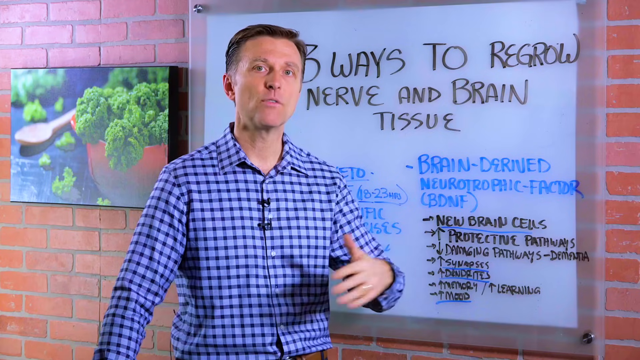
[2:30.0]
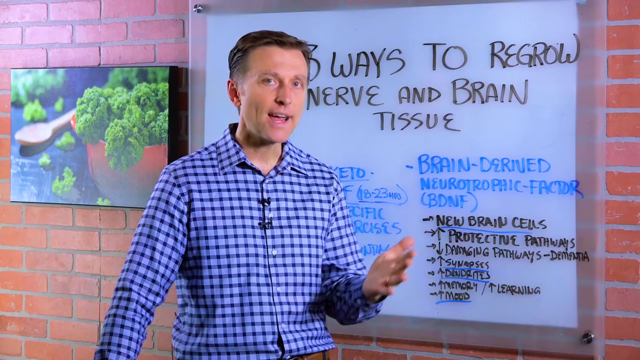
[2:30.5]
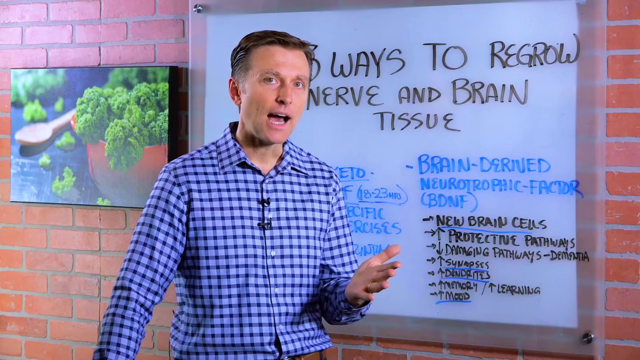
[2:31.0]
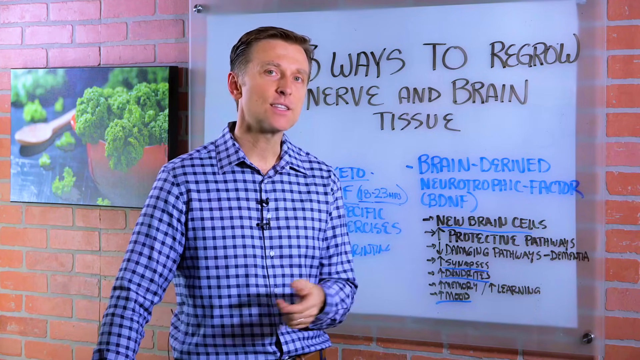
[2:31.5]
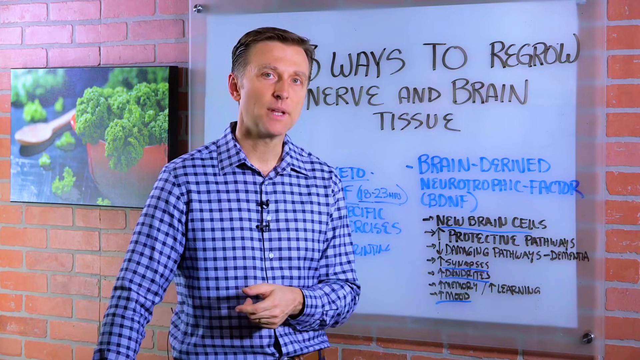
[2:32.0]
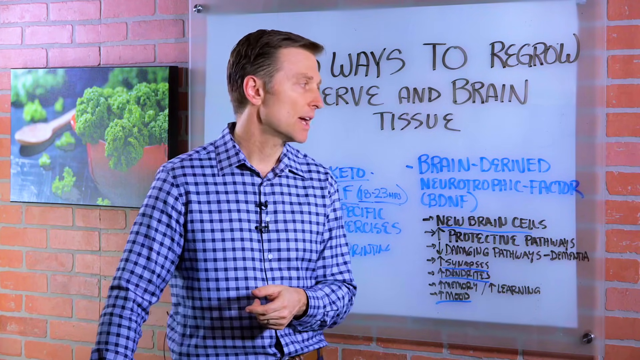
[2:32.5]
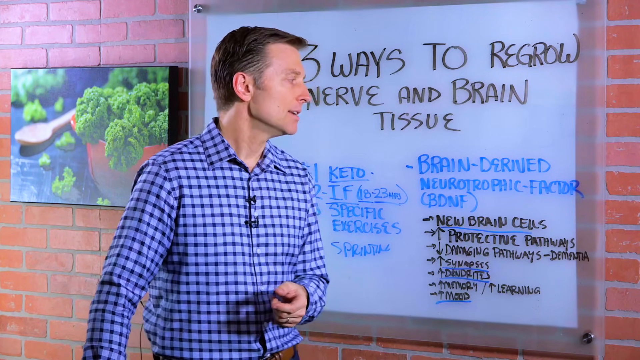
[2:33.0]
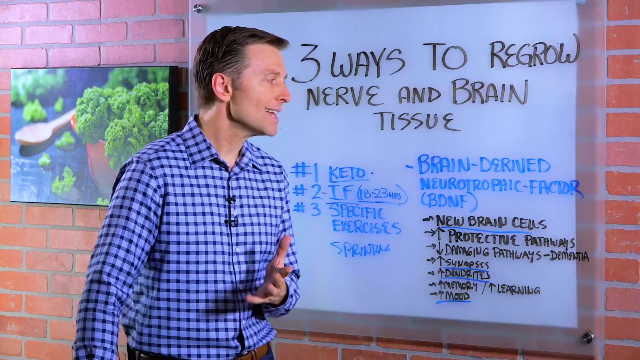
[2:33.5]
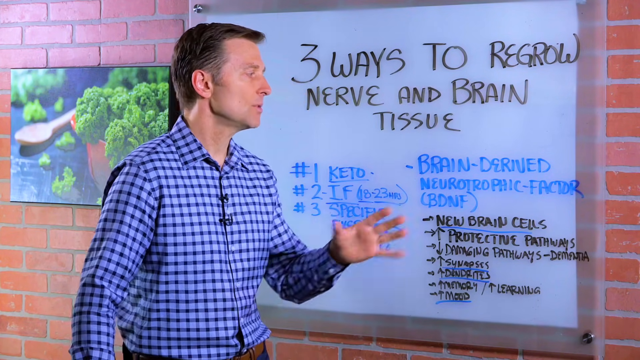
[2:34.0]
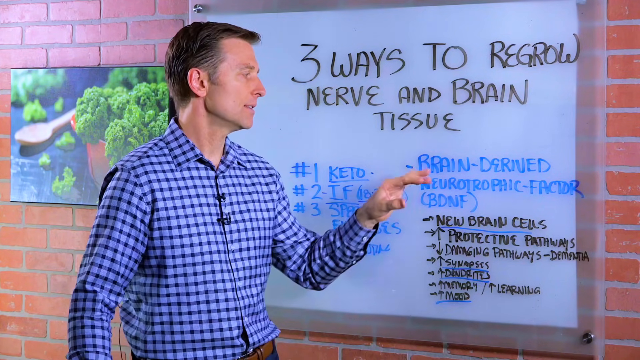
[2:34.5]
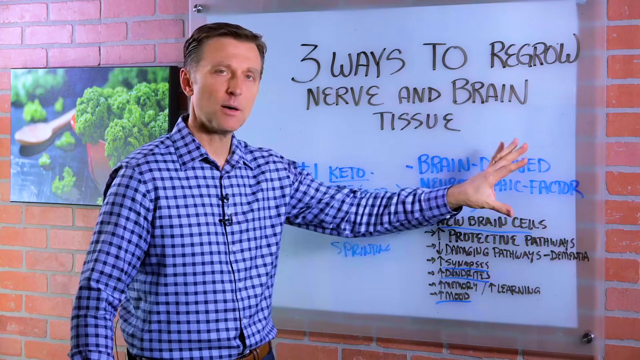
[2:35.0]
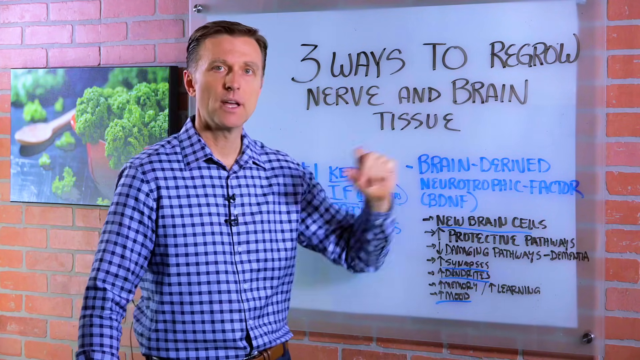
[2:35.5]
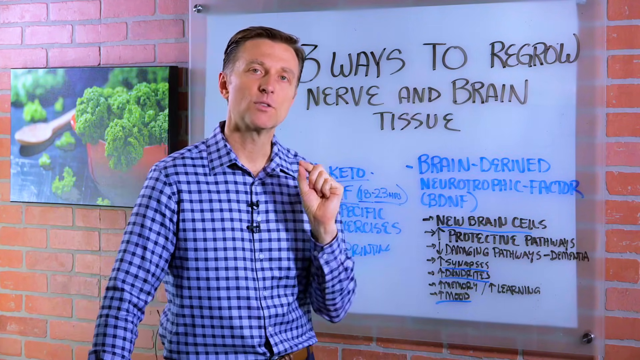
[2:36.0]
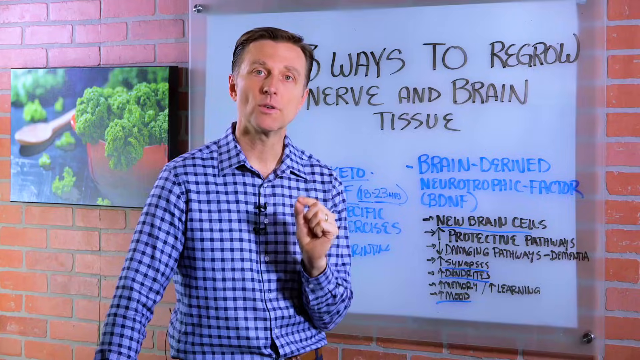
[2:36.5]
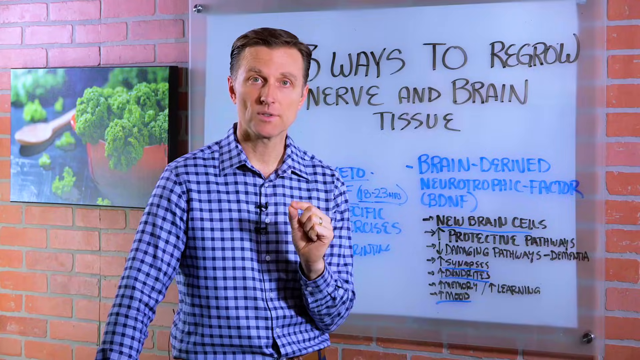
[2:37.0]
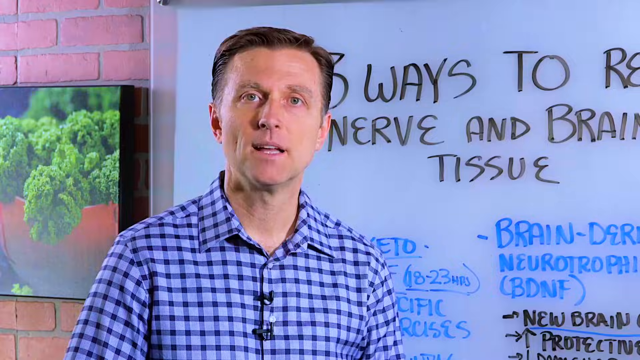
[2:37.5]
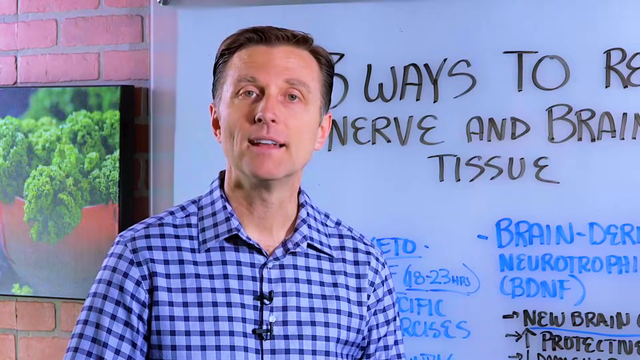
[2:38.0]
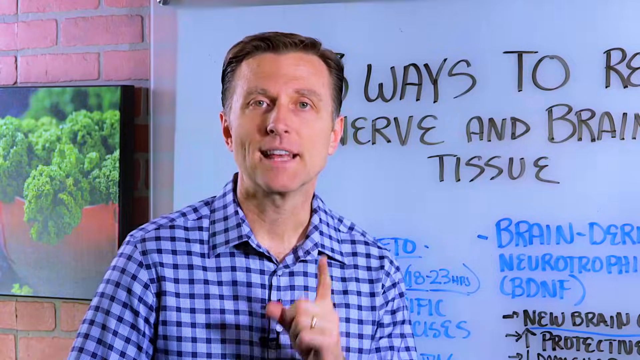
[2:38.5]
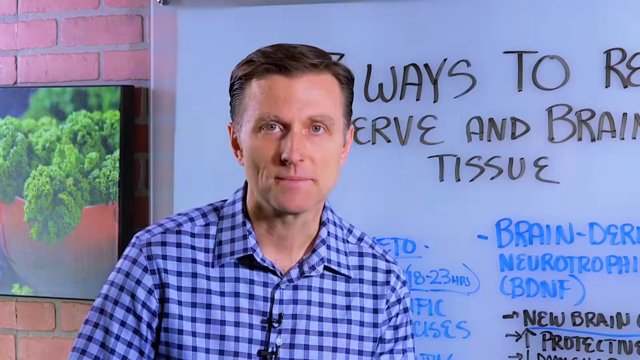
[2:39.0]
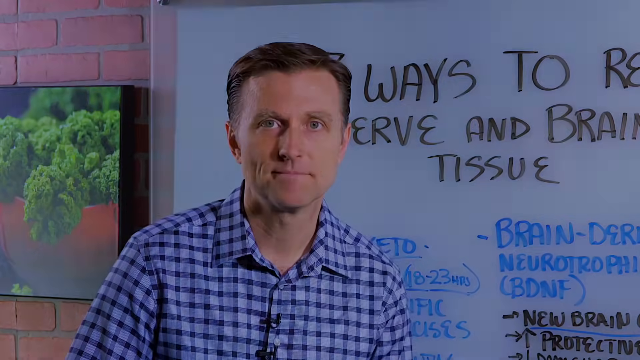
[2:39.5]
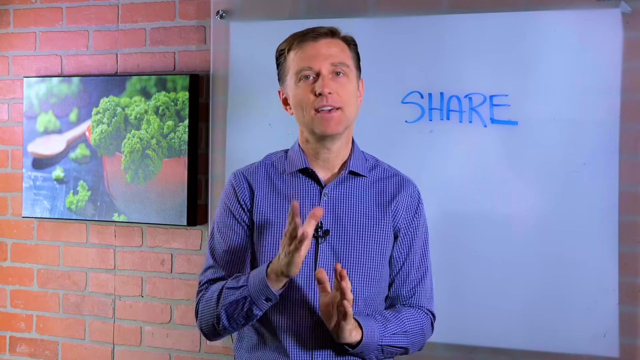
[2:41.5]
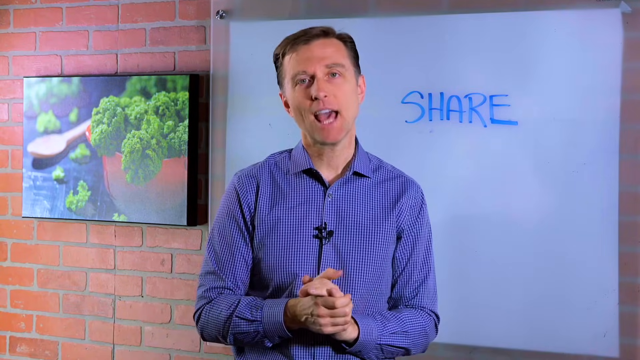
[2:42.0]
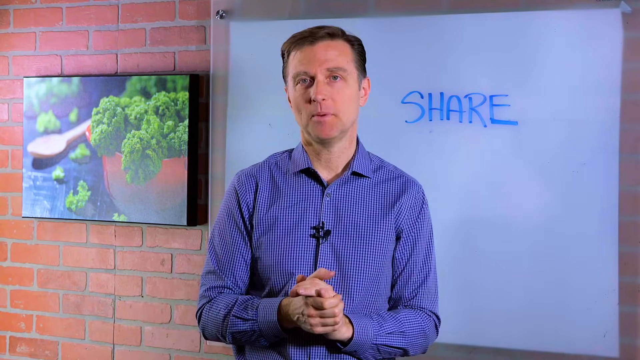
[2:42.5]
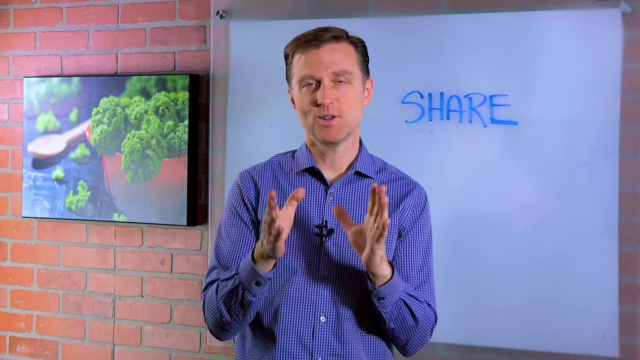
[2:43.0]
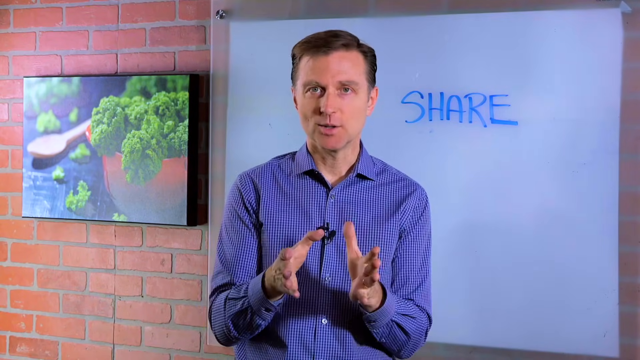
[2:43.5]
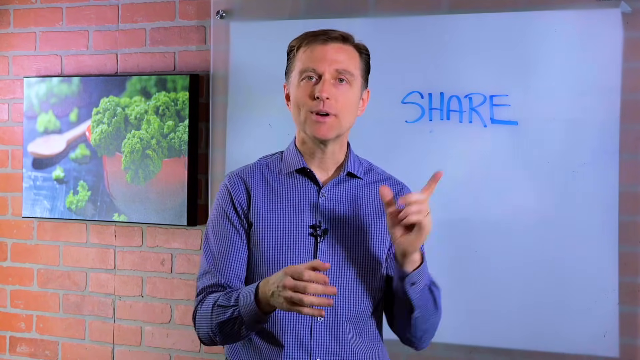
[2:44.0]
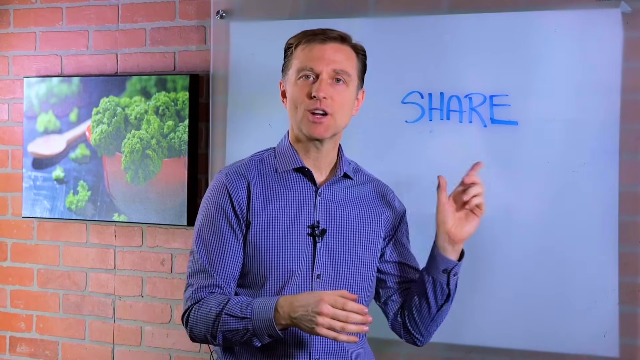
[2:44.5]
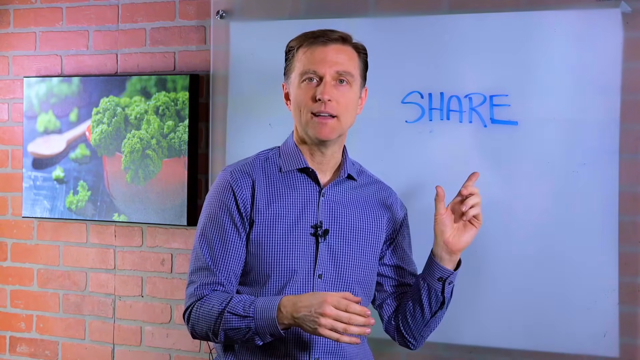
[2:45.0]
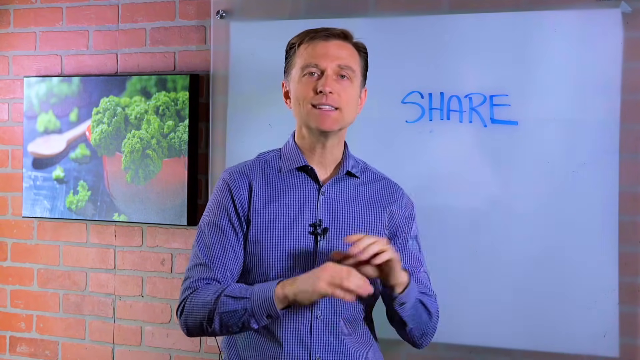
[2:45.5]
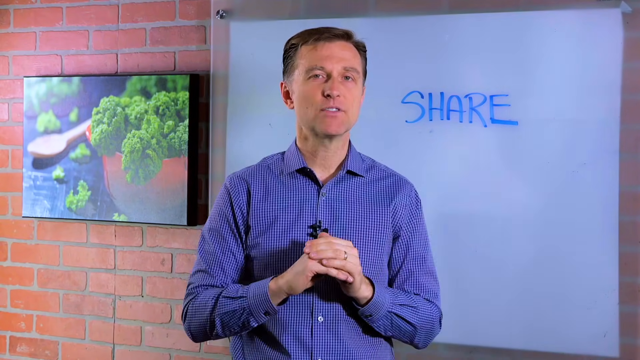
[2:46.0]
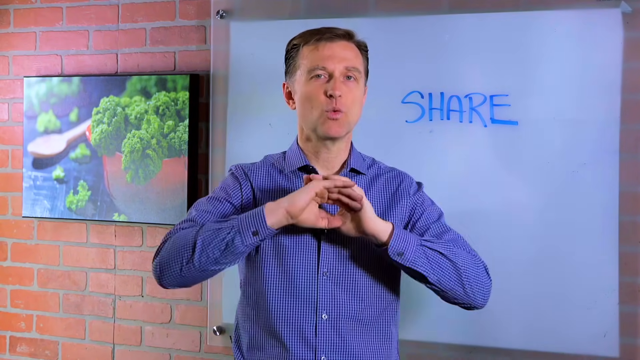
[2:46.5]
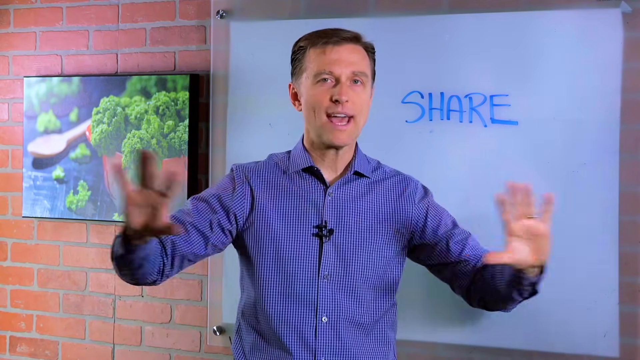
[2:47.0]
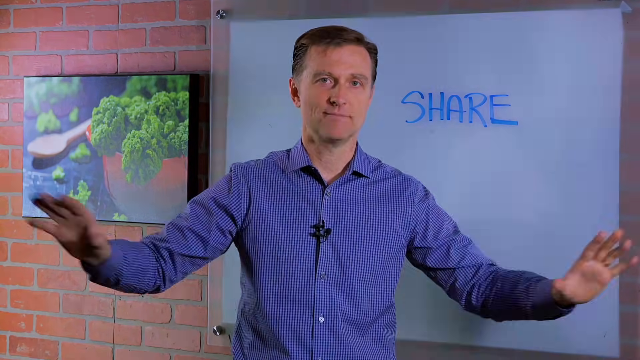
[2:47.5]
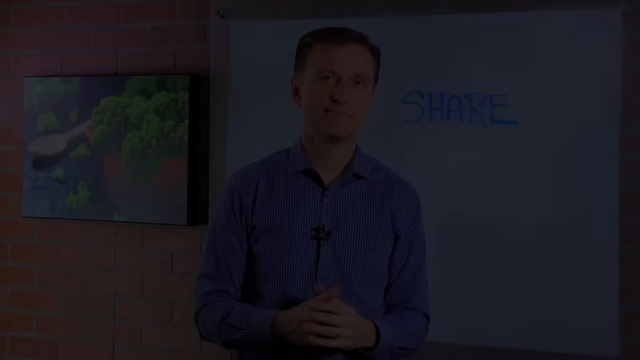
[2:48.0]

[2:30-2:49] A man stares at the camera and talks, apparently to his audience, using his hands. He wears a plaid shirt, and then the video cuts to him wearing a different purple shirt that is kind of striped. He seems to be talking about a whiteboard that reads "three ways to regrow nerve and brain tissue," with a numbered list from one to three beneath it and a bullet list on the right. The whiteboard is attached to a brick wall, and to its left is a portrait of a green vegetable in a red bowl on a black surface, with a wooden spoon and what appear to be pieces of the vegetable on the table as well. Throughout, the man talks to the camera as he kind of explains the whiteboard.